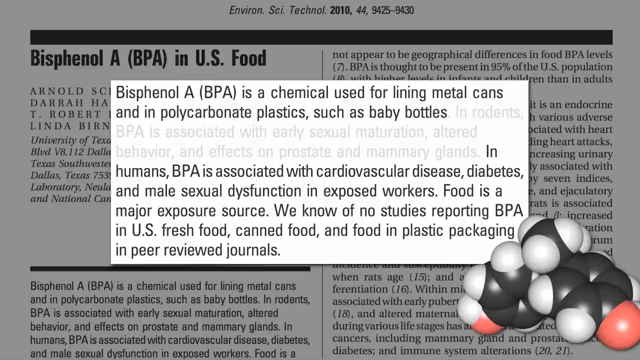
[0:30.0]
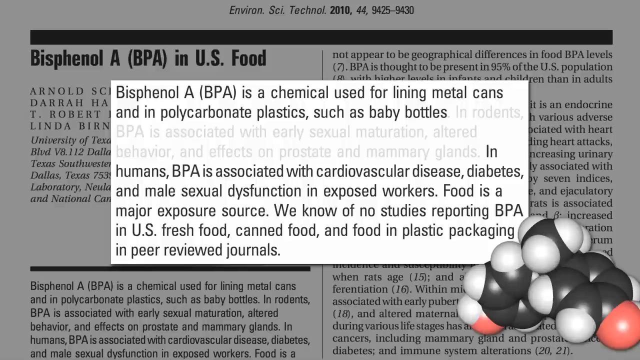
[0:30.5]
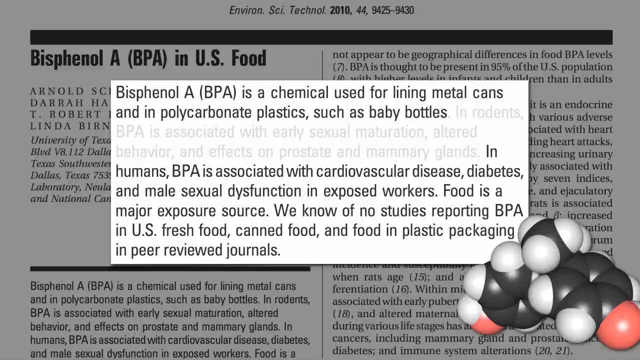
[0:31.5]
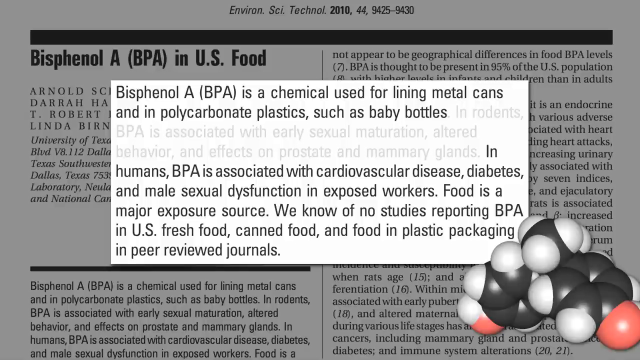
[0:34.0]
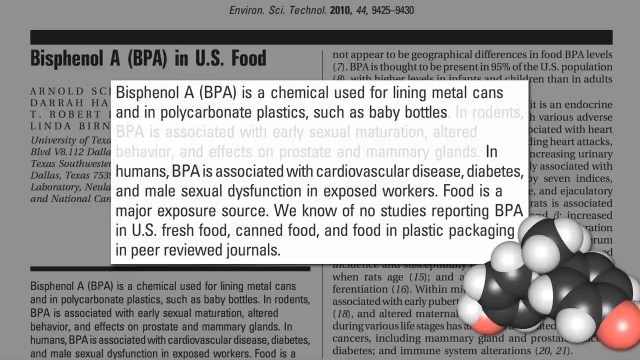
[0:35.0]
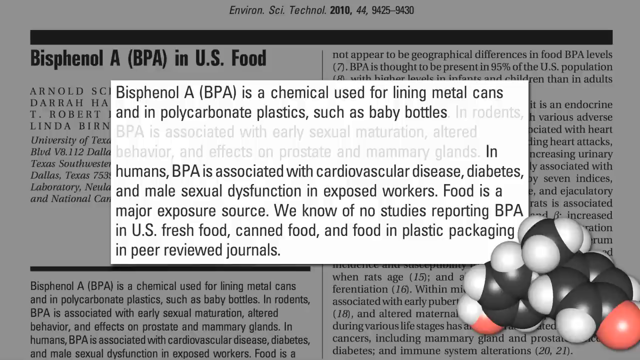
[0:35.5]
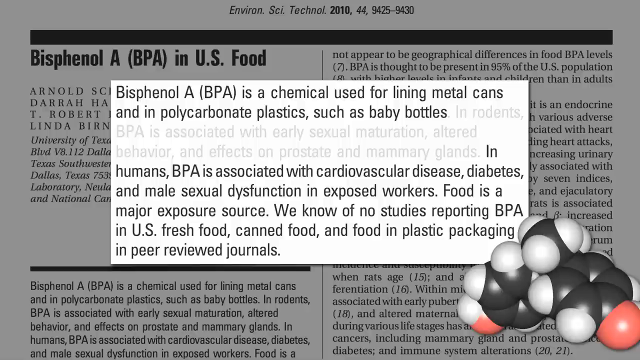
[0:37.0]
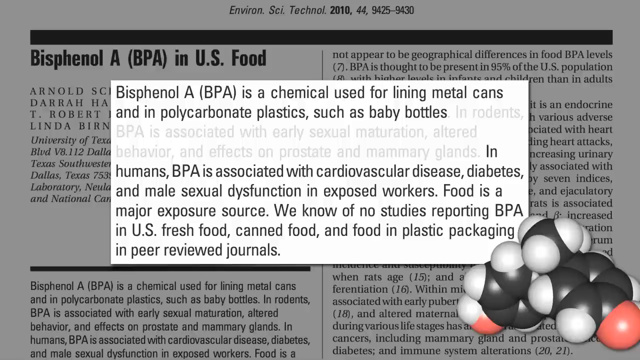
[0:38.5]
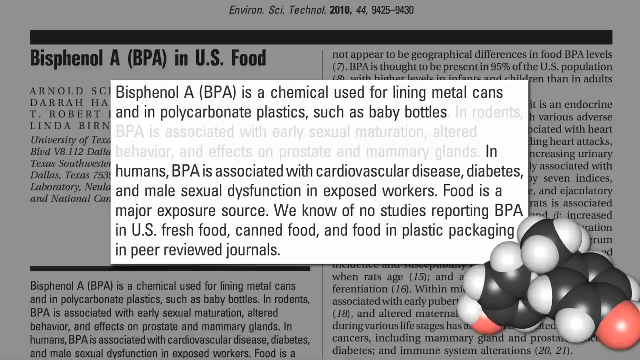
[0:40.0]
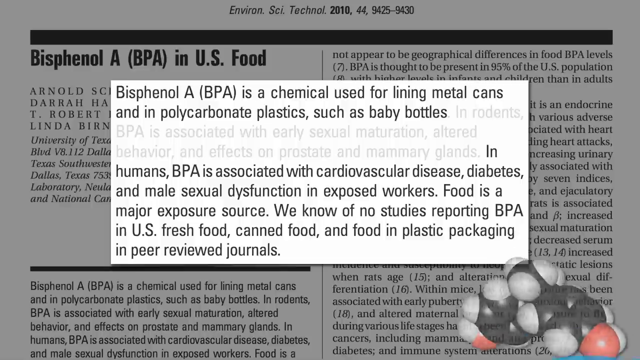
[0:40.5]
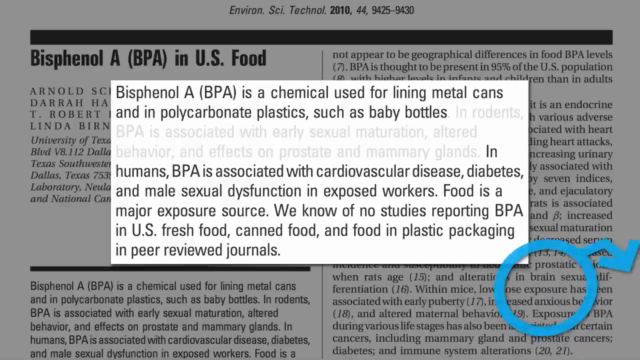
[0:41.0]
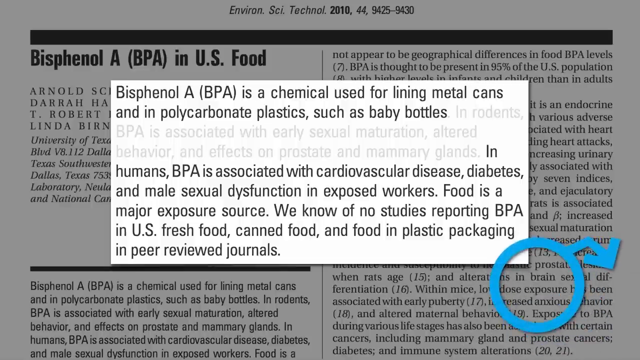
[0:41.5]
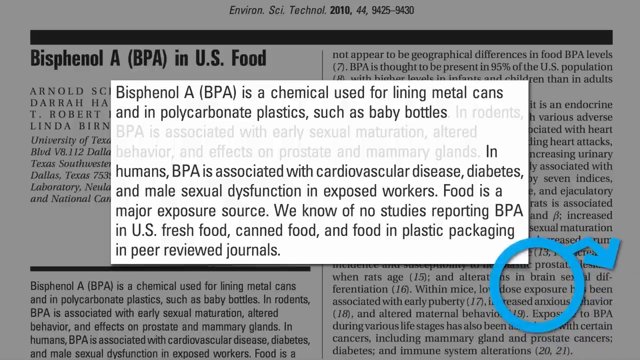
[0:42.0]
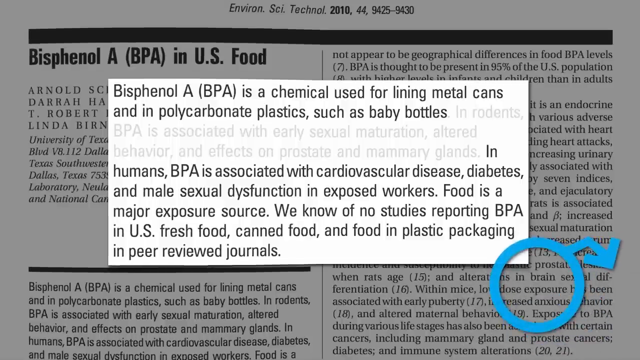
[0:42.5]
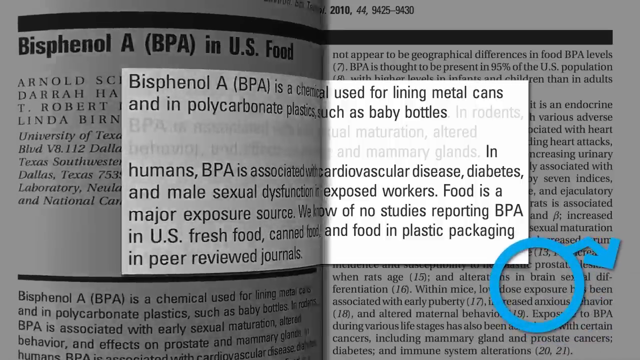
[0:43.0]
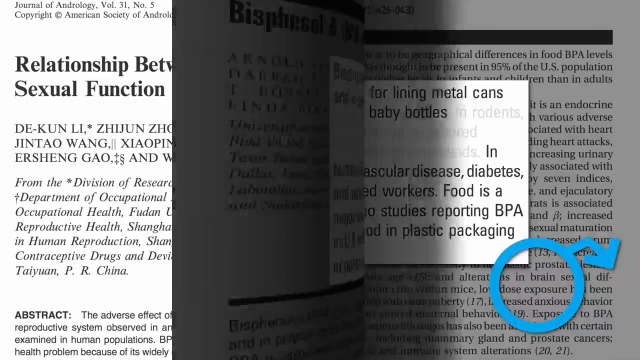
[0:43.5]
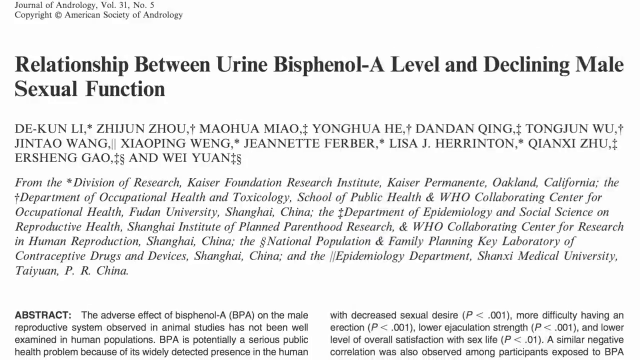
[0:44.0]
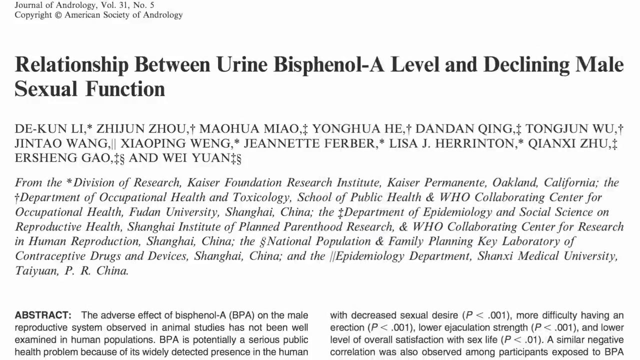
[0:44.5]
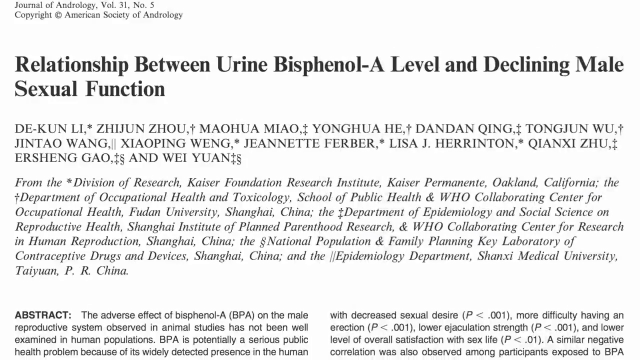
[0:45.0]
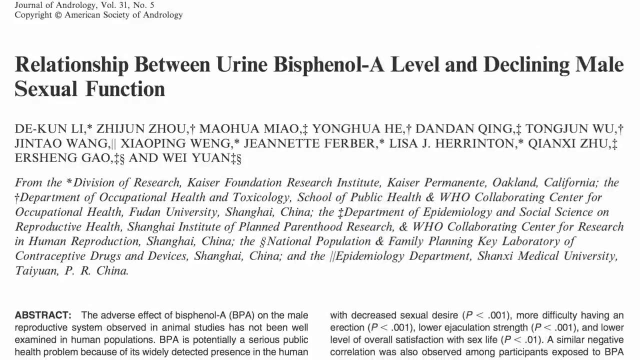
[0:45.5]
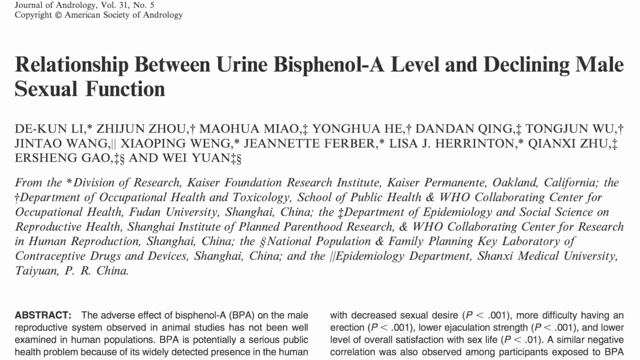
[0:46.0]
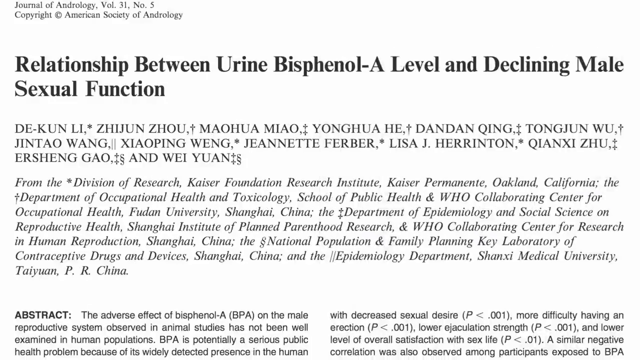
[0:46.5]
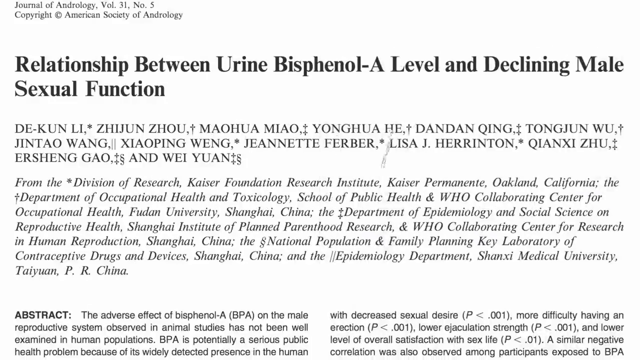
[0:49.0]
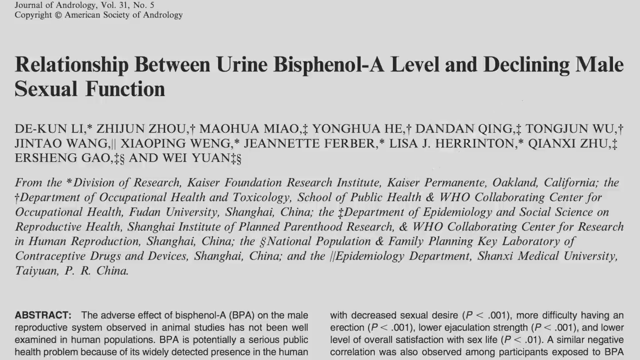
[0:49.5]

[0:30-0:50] The view is of some kind of presentation. At the top, on a white background, the page reads "Environsci Technol 2010, 44, 9425-9430". Then there is a black bar and the text "Bisphenol A, BPA in U.S. food", followed by what looks like the names of the people who were part of the research study, where it is from, and the study itself. A box in the middle shows some of the text highlighted, and in the lower right-hand corner there appears to be a cluster of black and white molecules or something similar. The box reads "Bisphenol A, BPA, is a chemical used for lining metal cans and in polycarbonate plastics, such as baby bottles. In rodents, BPA is associated with early sexual maturation, altered behavior, and effects on prostate and mammary glands. In humans, BPA is associated with cardiovascular disease, diabetes, and male sexual dysfunction in exposed workers. Food is a major exposure source. We know of no studies reporting BPA in U.S. fresh food, canned food, and food and plastic packaging in peer-reviewed journals". It stays on this page for a while. Suddenly the molecules are replaced by a blue circle, with the research study still visible below it; the circle has an arrow, a line that goes up and then down. A line then appears down the journal page as if it were a book, and it turns like a page. The new page, on a white background, reads "Journal of Andrology, Volume 31, Number 5, Copyright American Society of Andrology" and "Relationship between urine bisphenol A-level and declining male sexual function". Below are many names that all seem to be Chinese, then the text "From the Division of Research, Kaiser Foundation Research Institute, Kaiser Permanente, Oakland, California, the Department of Occupational Health and Toxicology, School of Public Health, and WHO Collaborating Center for Occupational Health, Fudan University, Shanghai, China, the Department of Epidemiology and Social Science on Reproductive Health, Shanghai Institute of Planned Parenthood Research, and WHO Collaborating Center for Research in Human Reproduction, Shanghai, China, the National Population and Family Planning Laboratory of Contraceptive Drugs and Devices, Shanghai, China, and the Epidemiology Department, Shaanxi Medical University, Taiwan, PR, China". There is more text below that cannot quite be read. It then seems to zoom in on part of the page, and a smaller box starts to pop up but has not fully appeared, so its text cannot be read.